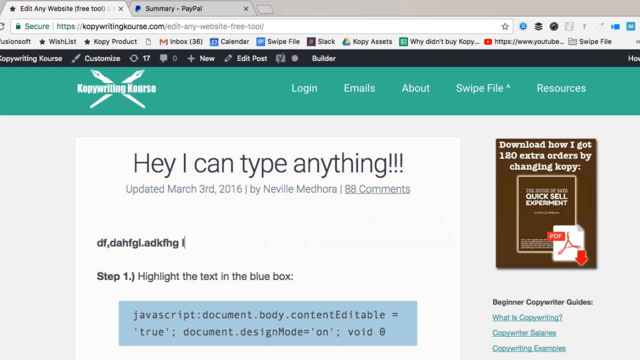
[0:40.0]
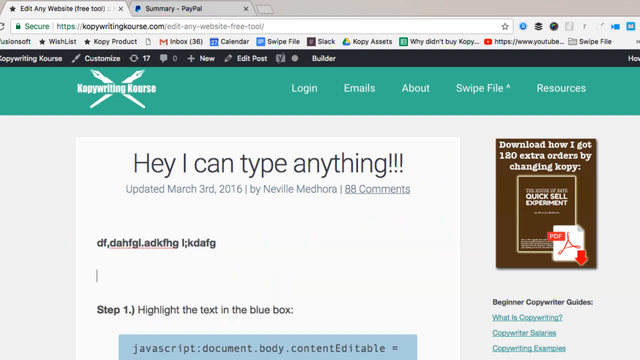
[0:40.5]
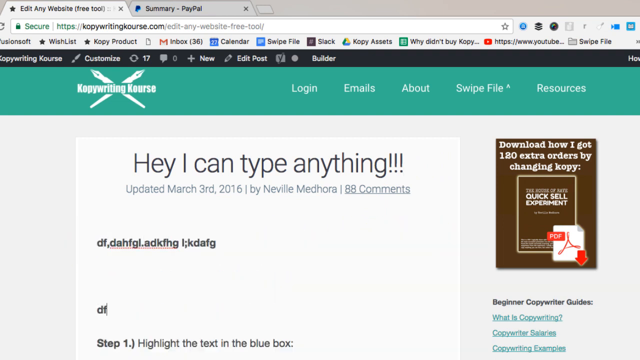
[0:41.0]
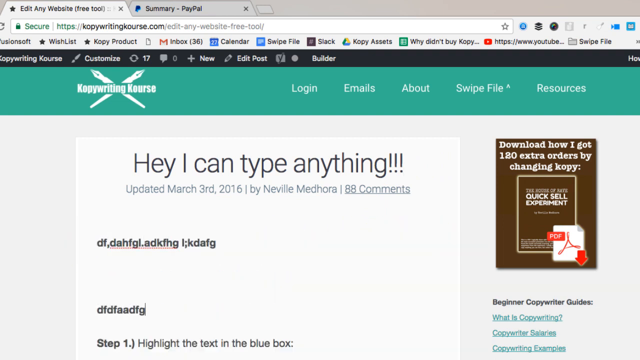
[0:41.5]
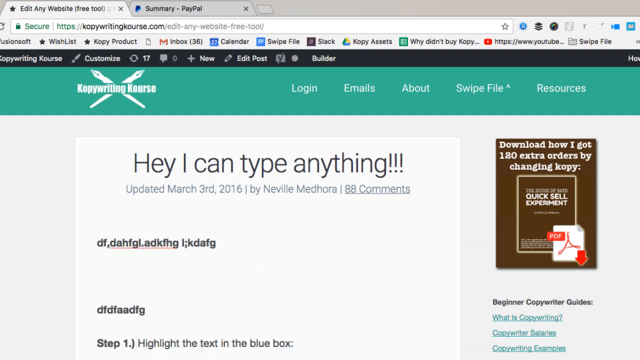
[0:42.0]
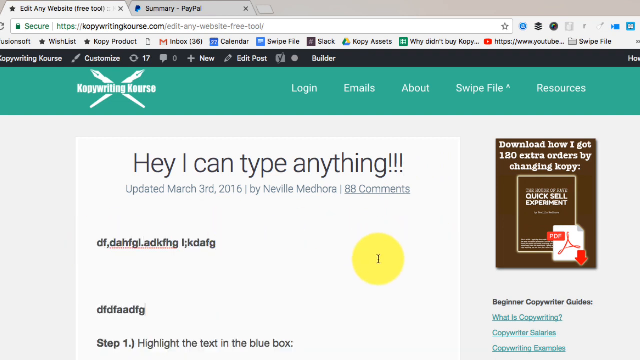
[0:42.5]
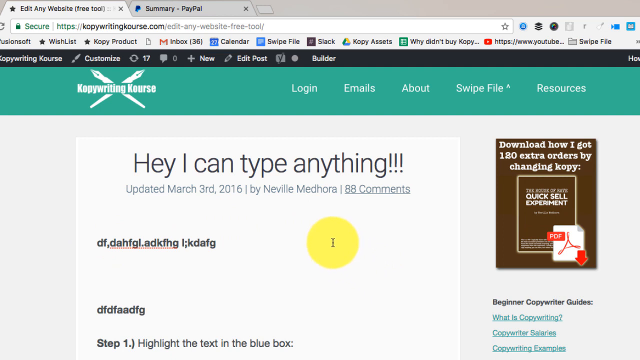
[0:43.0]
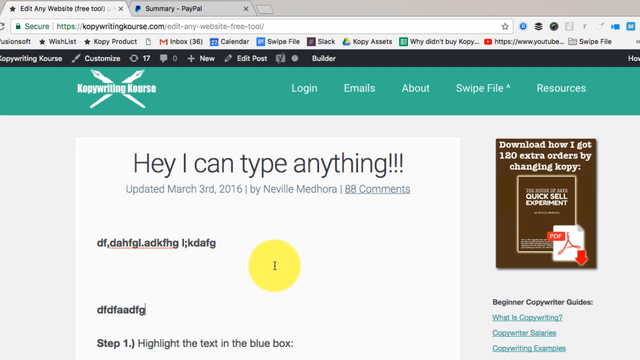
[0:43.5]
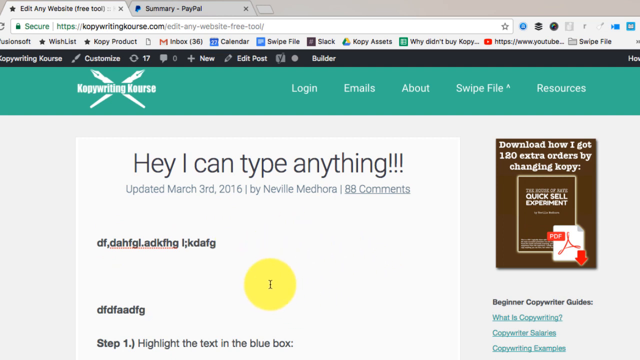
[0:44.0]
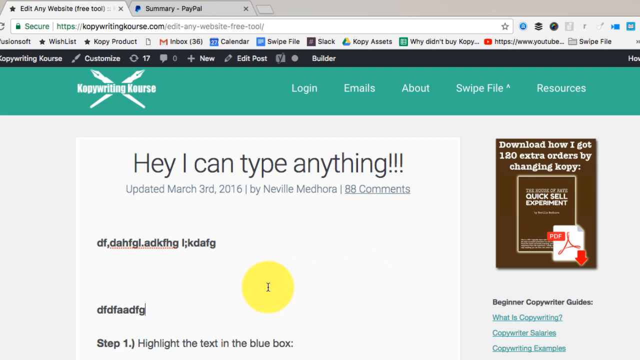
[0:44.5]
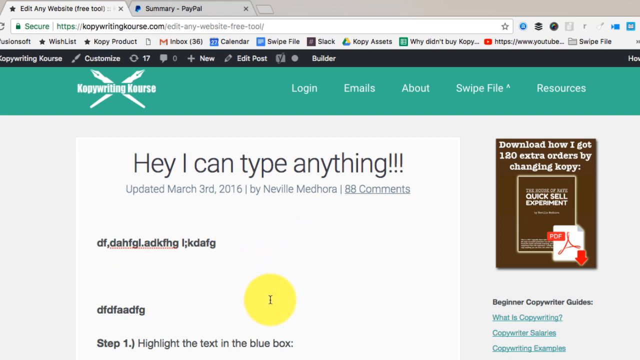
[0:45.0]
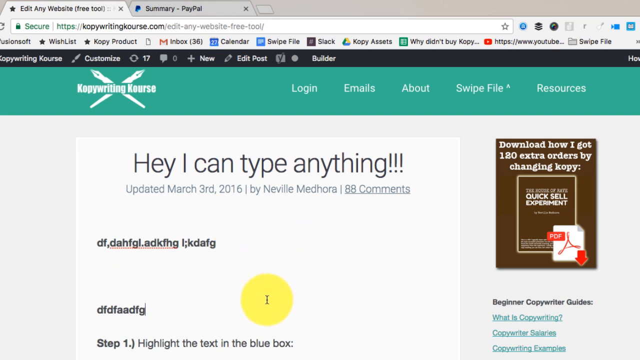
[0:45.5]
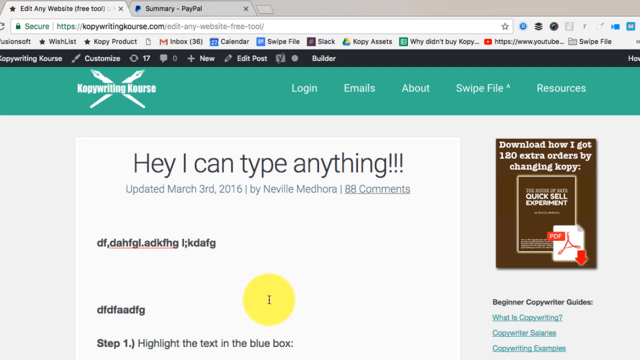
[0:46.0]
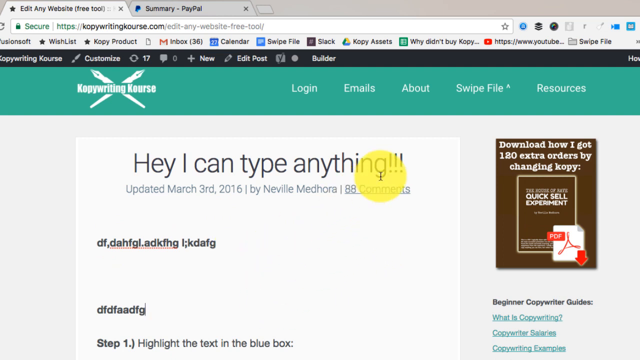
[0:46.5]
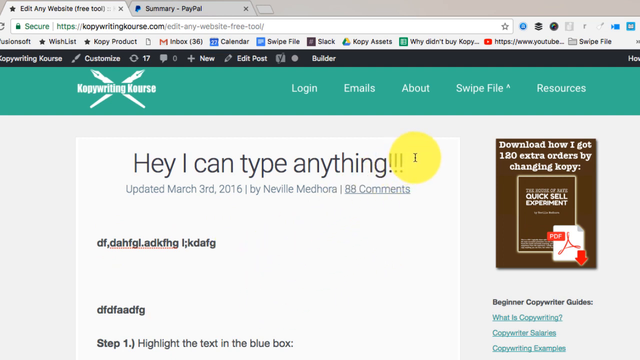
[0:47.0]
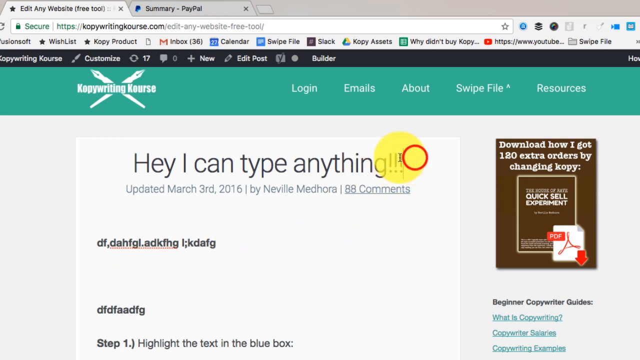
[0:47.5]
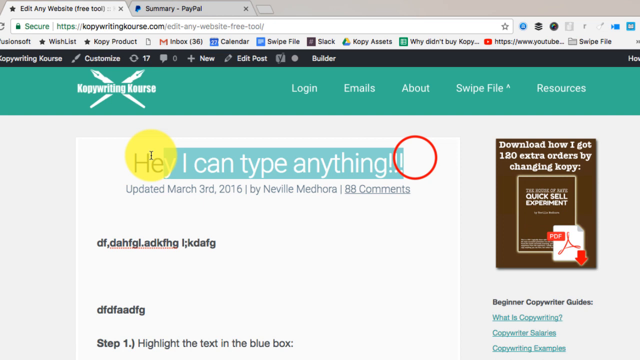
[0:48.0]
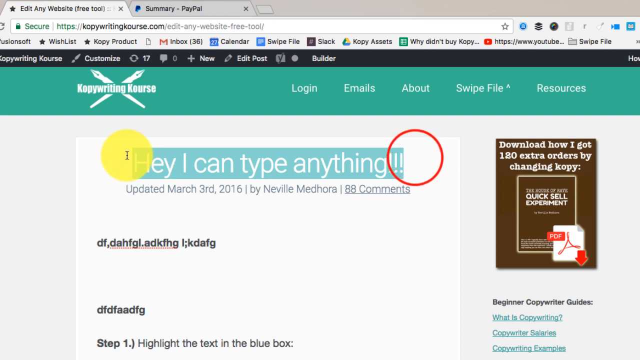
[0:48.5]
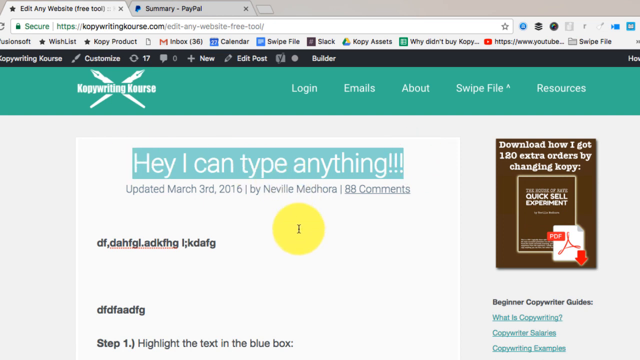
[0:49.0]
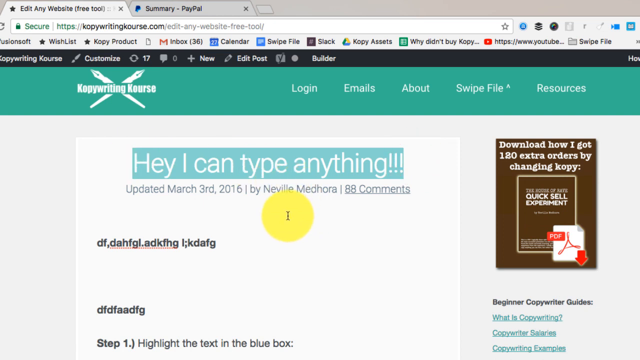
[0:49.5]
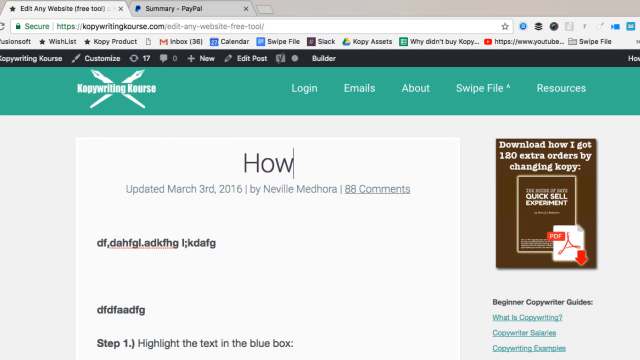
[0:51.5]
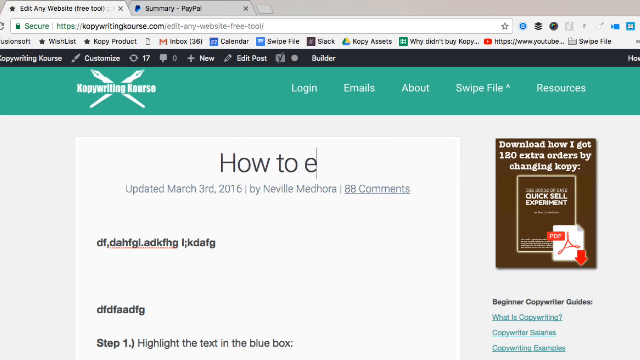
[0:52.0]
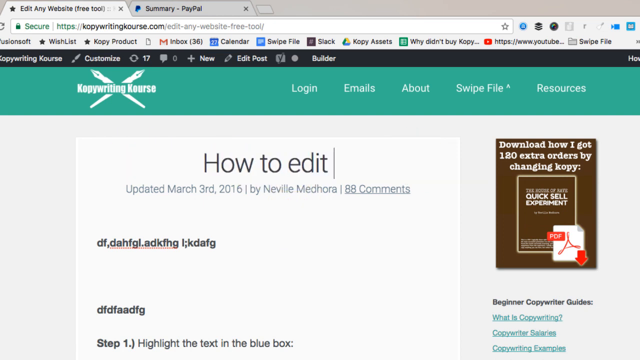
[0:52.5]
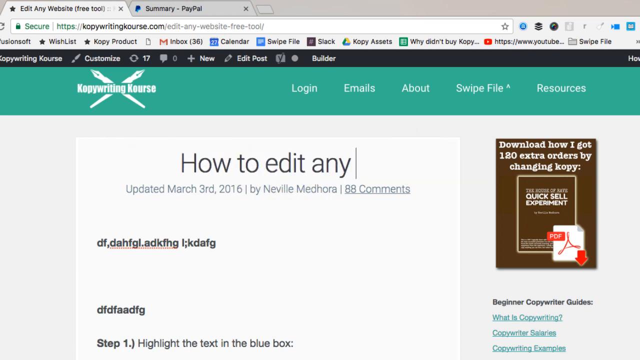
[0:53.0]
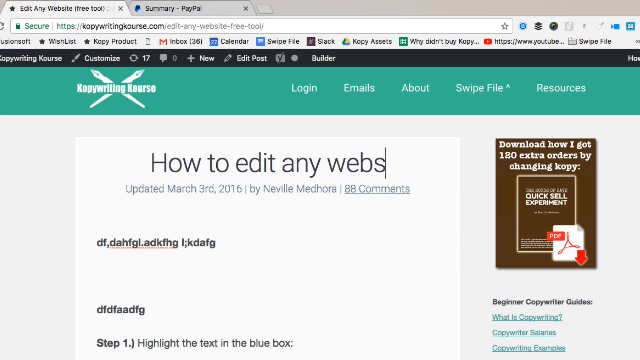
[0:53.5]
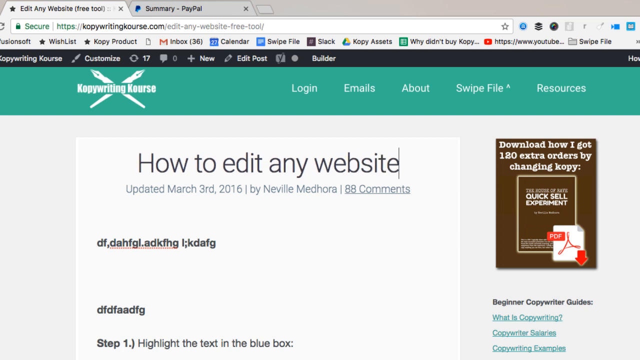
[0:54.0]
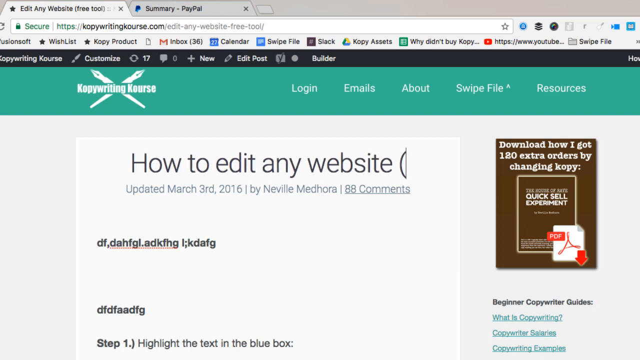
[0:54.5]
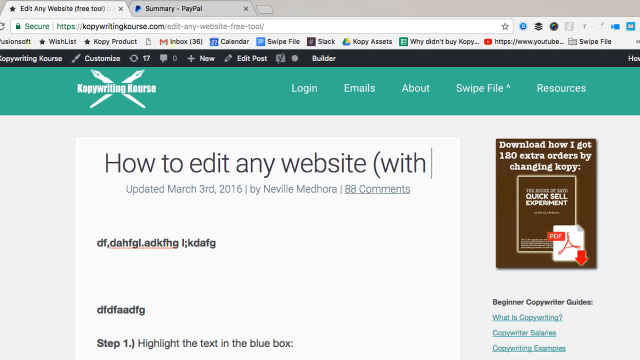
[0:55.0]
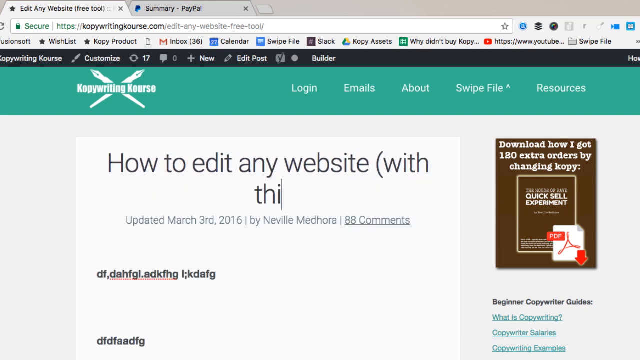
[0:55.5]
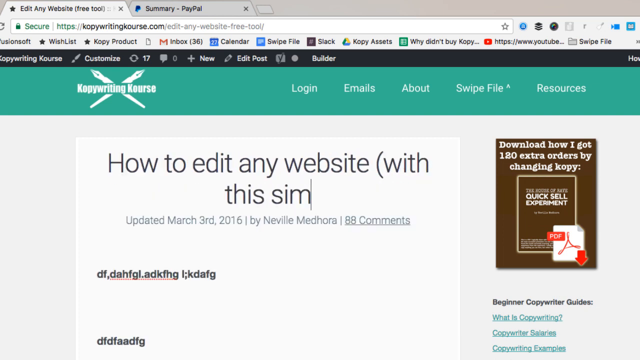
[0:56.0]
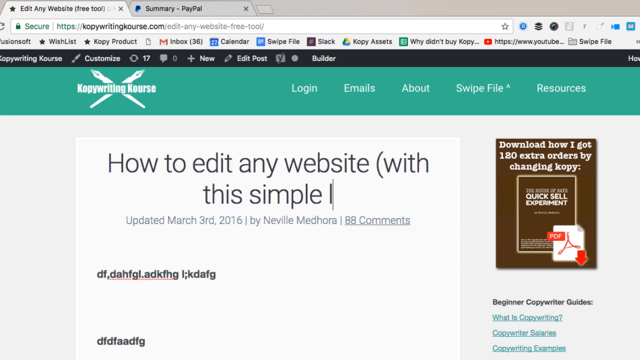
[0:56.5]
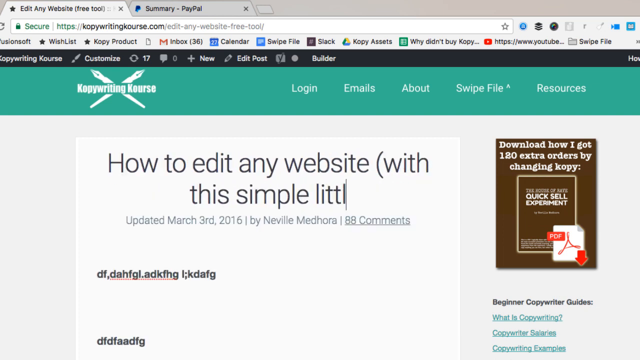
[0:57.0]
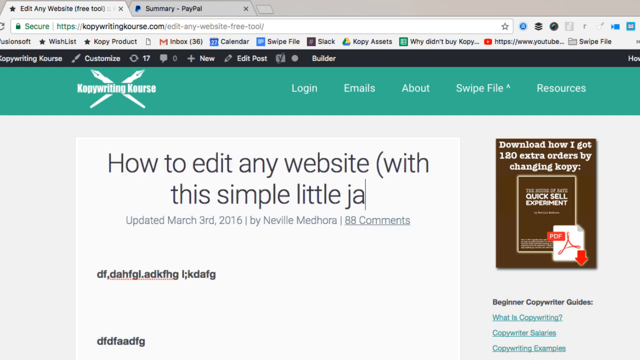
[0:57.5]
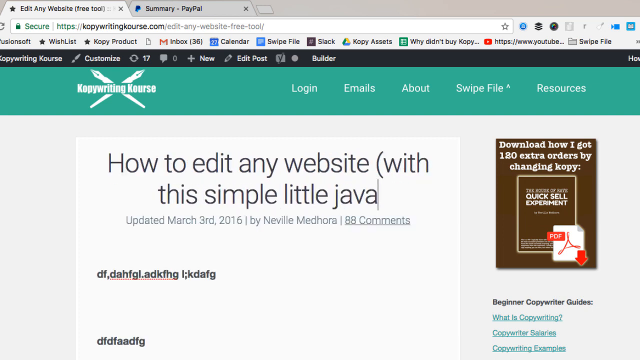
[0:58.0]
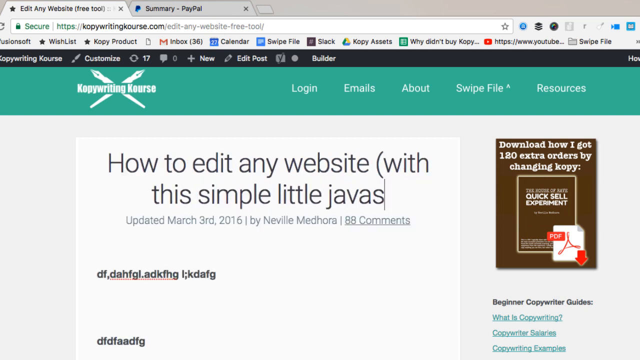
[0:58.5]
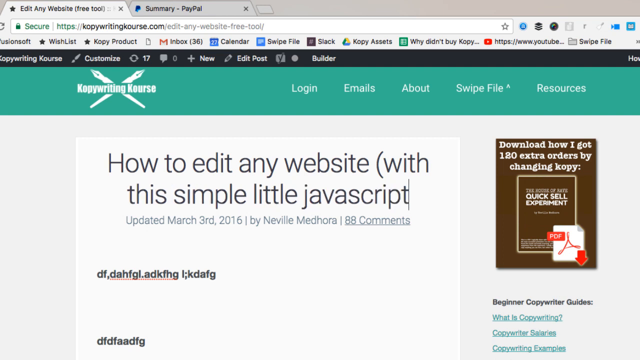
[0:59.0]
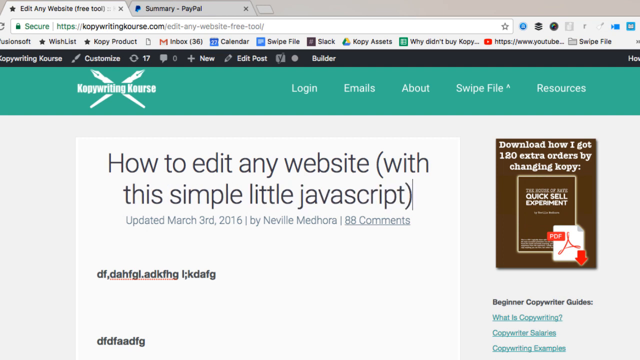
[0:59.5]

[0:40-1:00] On the Kopywriting Kourse website, someone is attempting to edit a website by using the steps shown on the site. Below the light green navigation bar is a white text box in which someone has typed "Hey, I can type anything." Below this the page says "updated March 3, 2016 by Neville Medhora" and "88 comments." A yellow circle with a cursor bar in it moves around the screen, highlighting other lines and typing different text in their place. It highlights the "Hey, I can type anything" line, which disappears, and someone types a different line in its place that reads "How to edit any website (with this simple little javascript)." On the right side of the screen are links to additional copywriting guides, shown as PDF files with simulated book covers as icons.